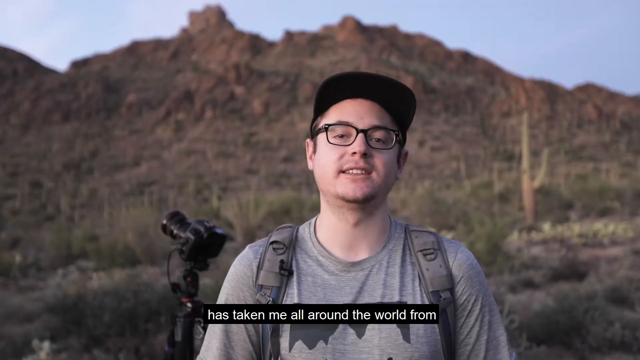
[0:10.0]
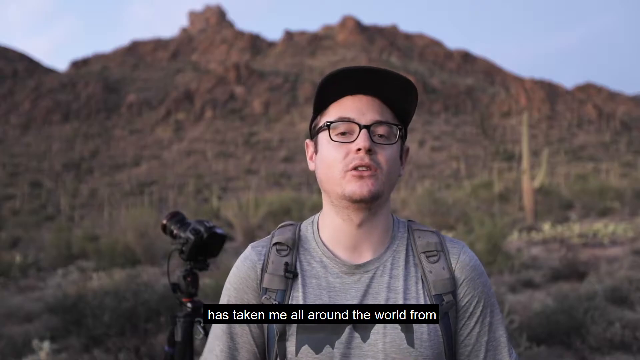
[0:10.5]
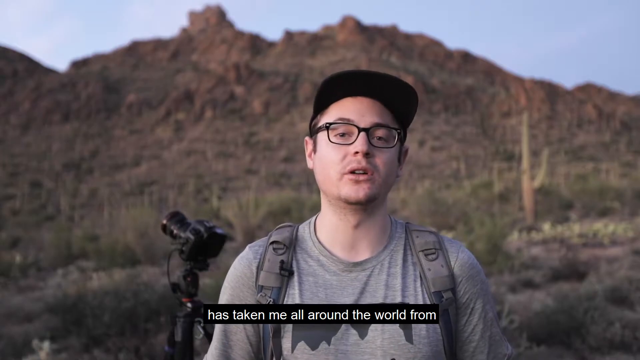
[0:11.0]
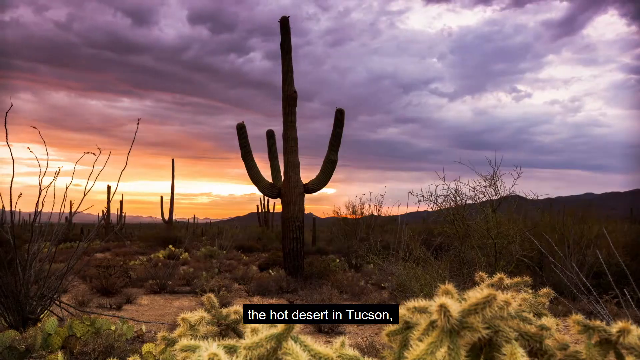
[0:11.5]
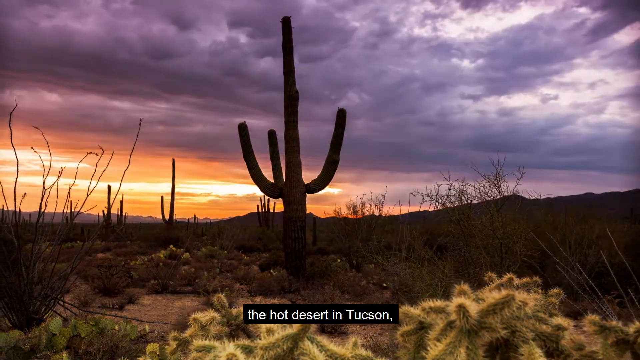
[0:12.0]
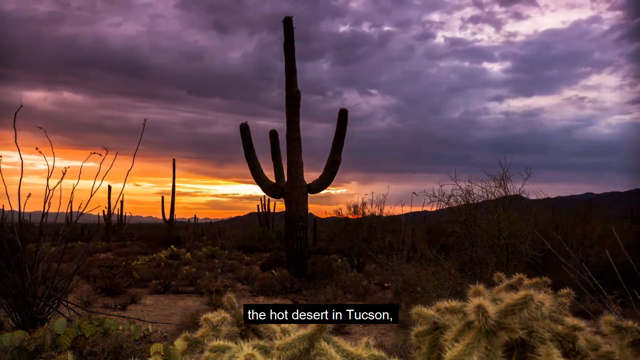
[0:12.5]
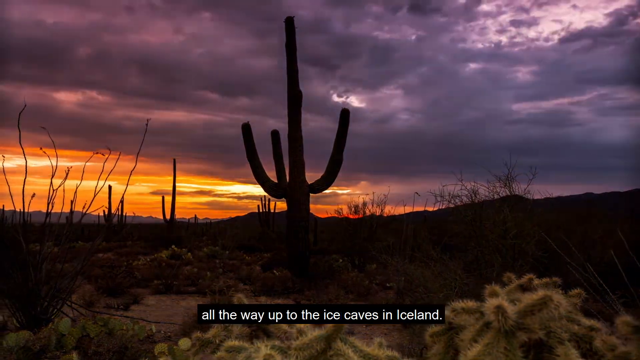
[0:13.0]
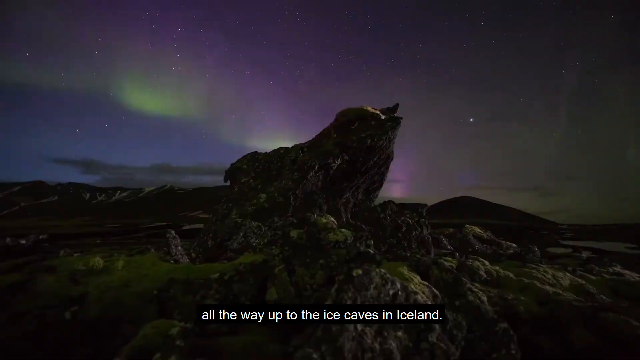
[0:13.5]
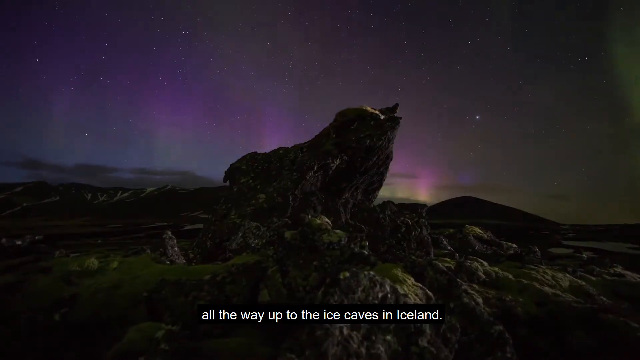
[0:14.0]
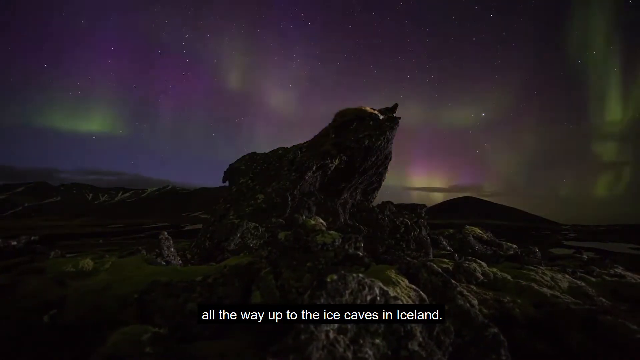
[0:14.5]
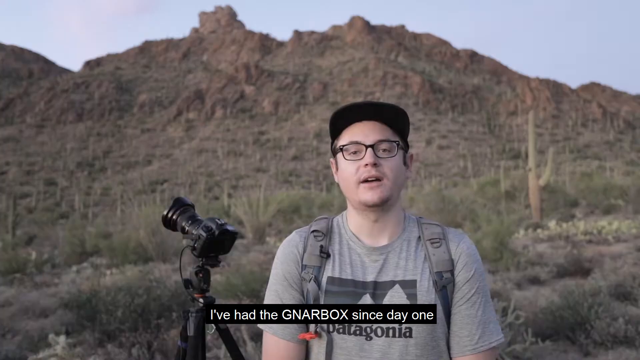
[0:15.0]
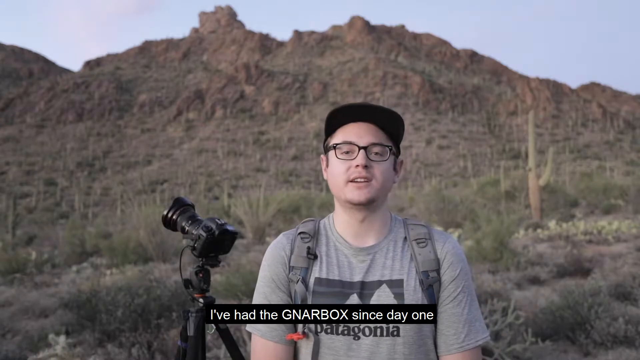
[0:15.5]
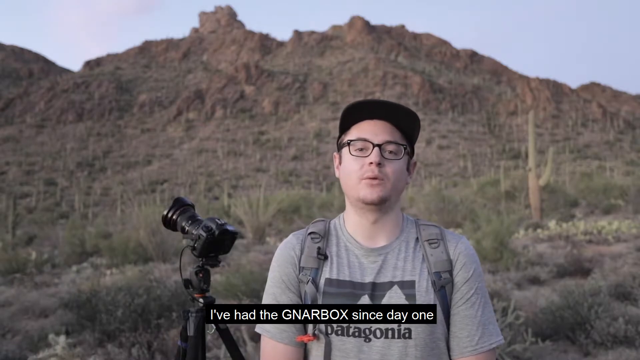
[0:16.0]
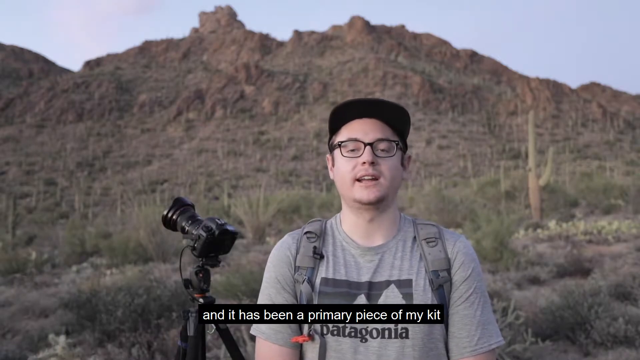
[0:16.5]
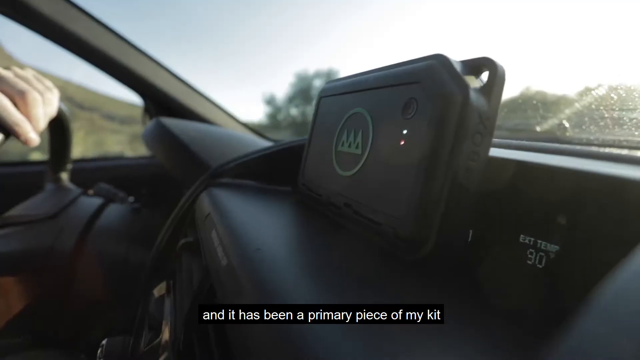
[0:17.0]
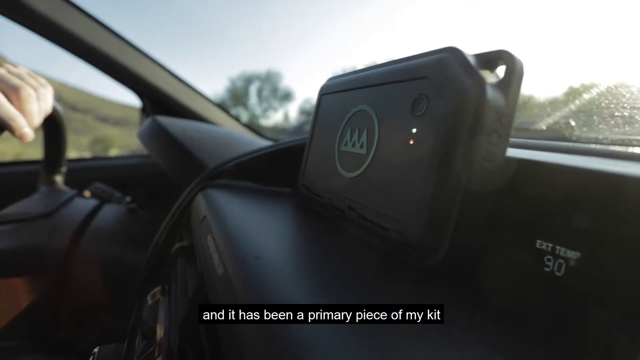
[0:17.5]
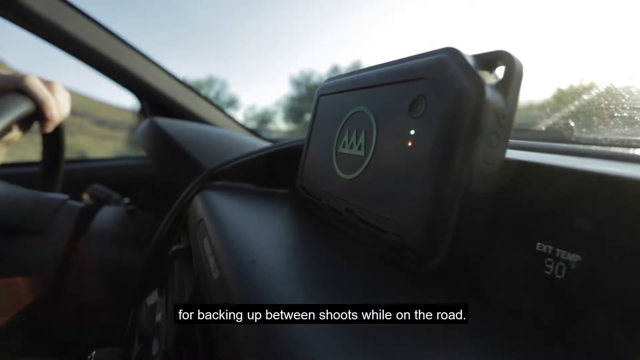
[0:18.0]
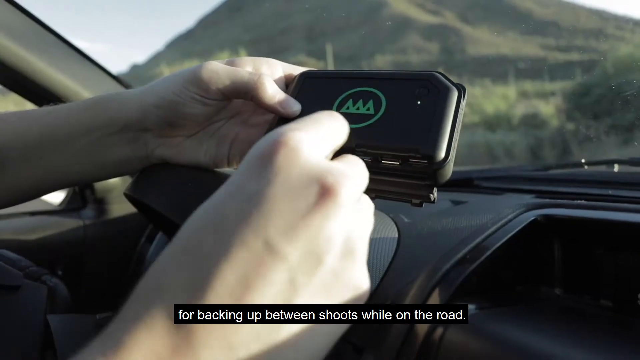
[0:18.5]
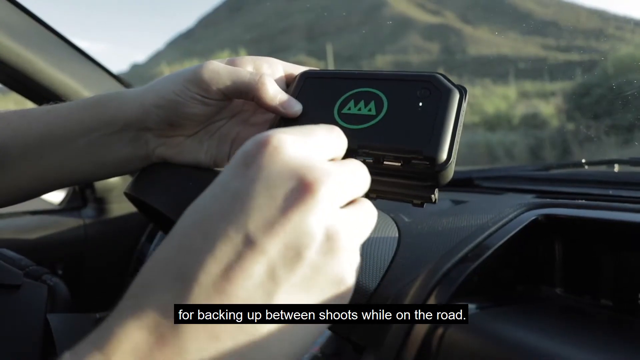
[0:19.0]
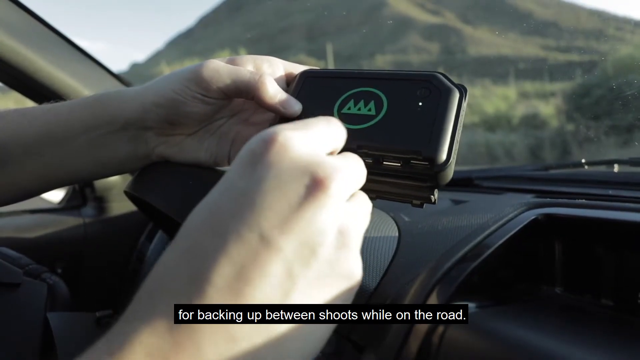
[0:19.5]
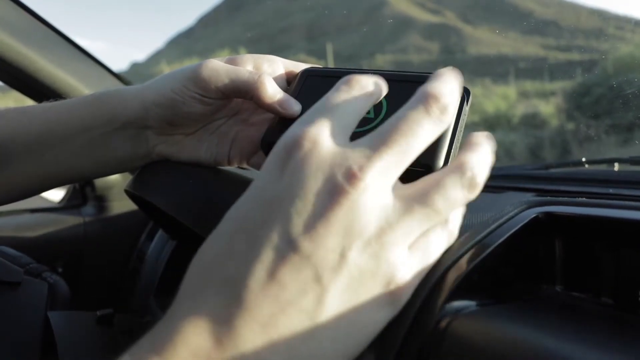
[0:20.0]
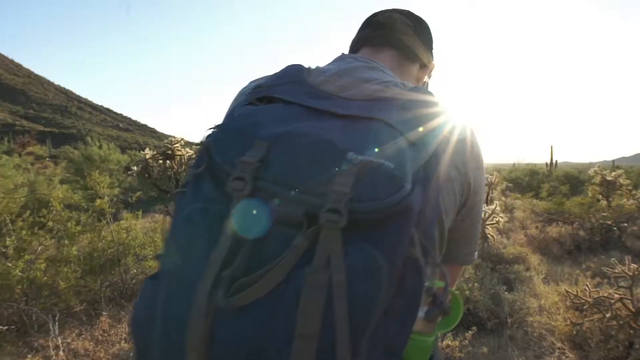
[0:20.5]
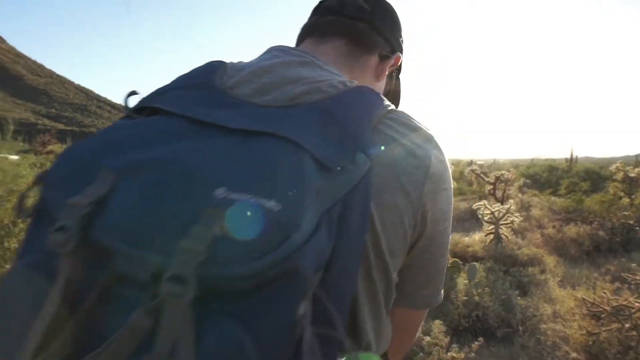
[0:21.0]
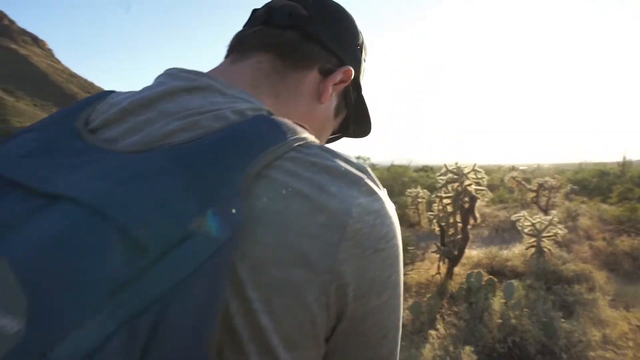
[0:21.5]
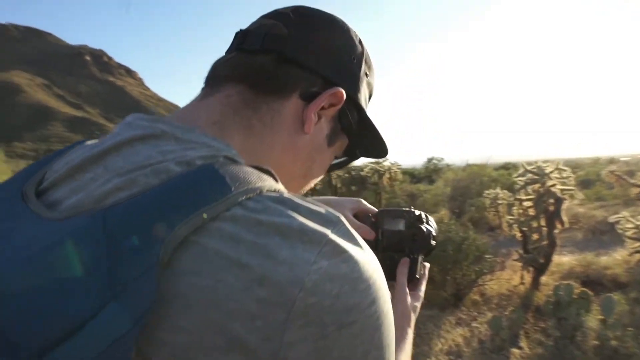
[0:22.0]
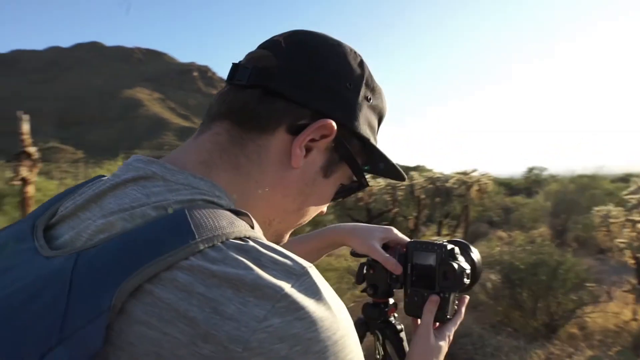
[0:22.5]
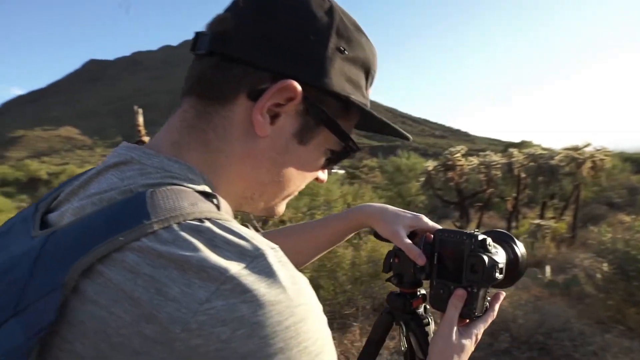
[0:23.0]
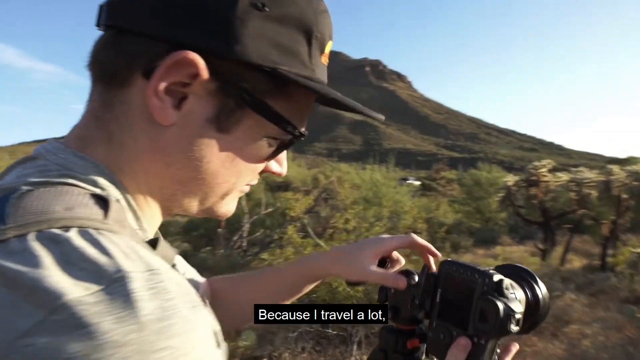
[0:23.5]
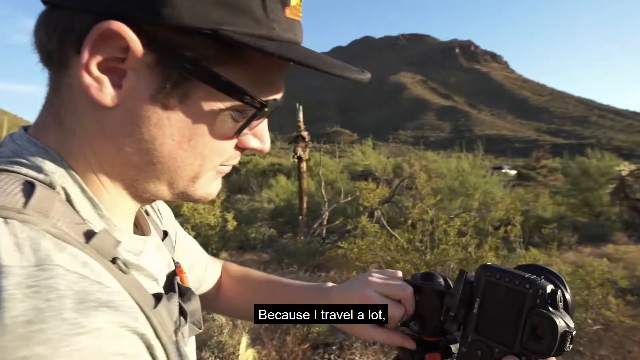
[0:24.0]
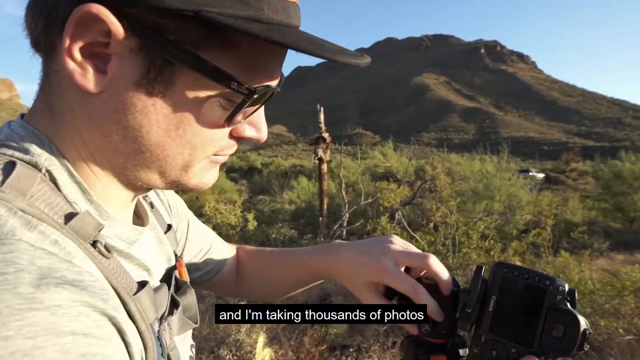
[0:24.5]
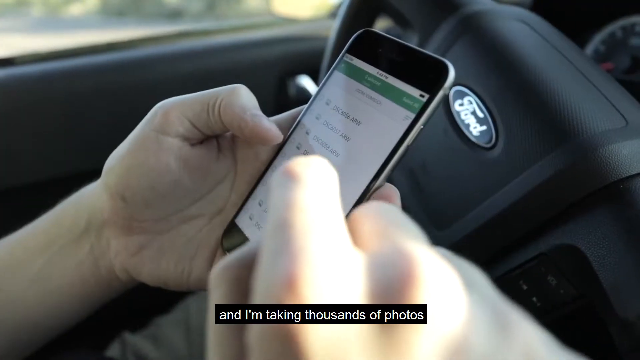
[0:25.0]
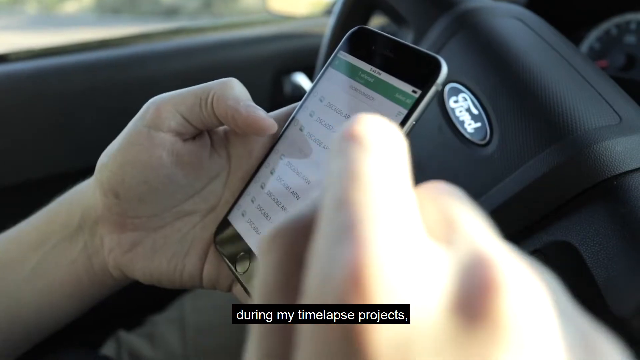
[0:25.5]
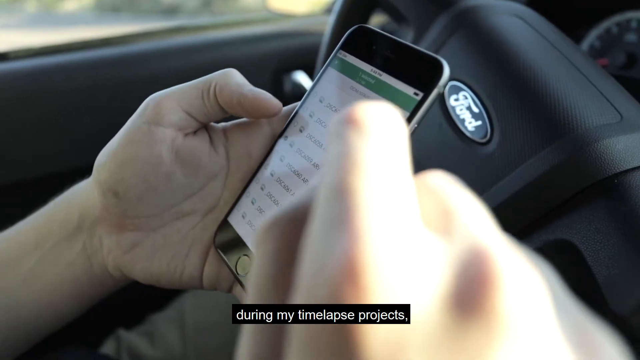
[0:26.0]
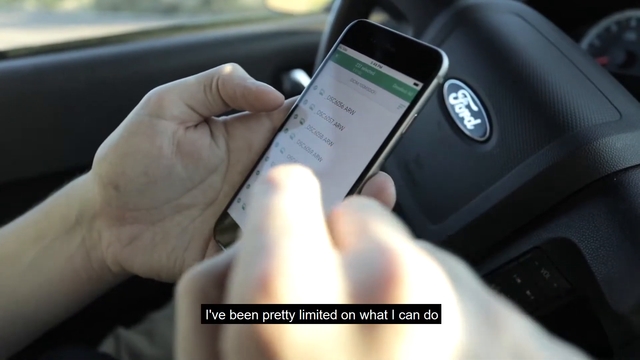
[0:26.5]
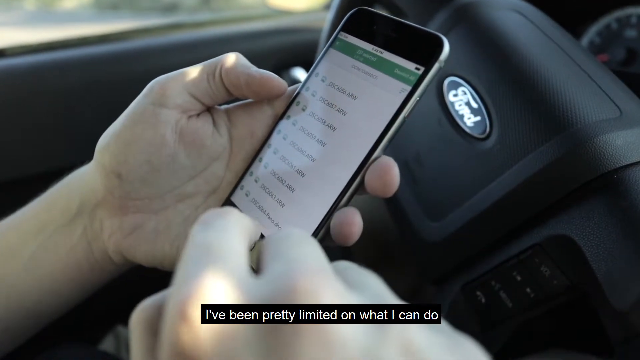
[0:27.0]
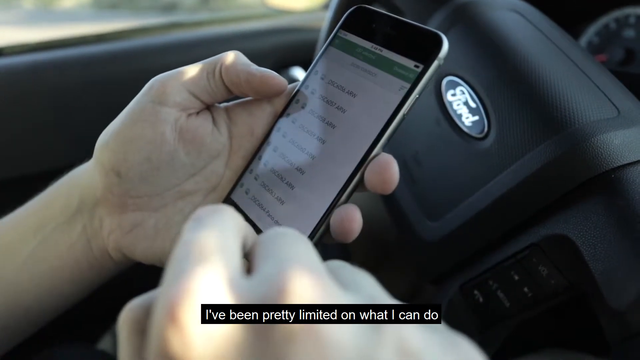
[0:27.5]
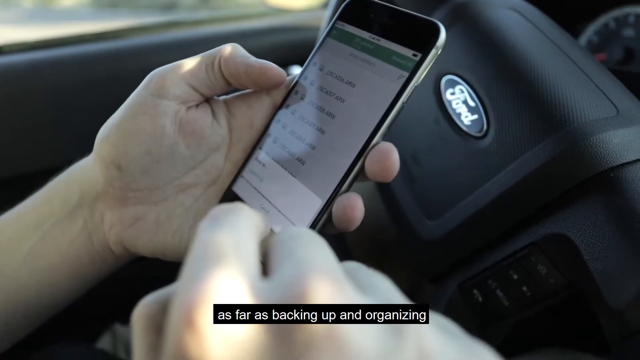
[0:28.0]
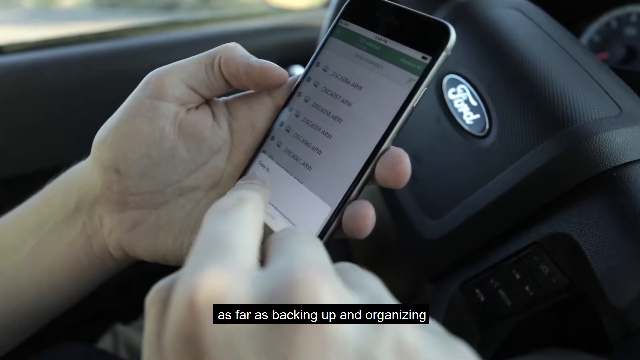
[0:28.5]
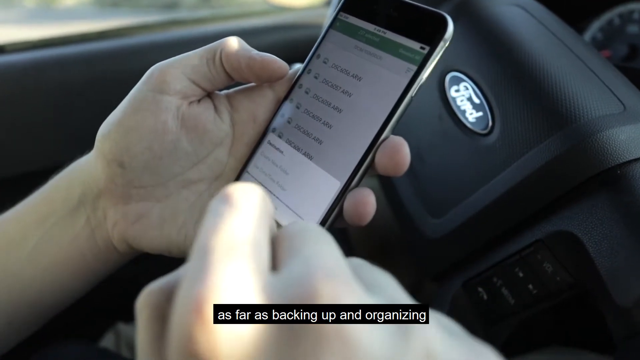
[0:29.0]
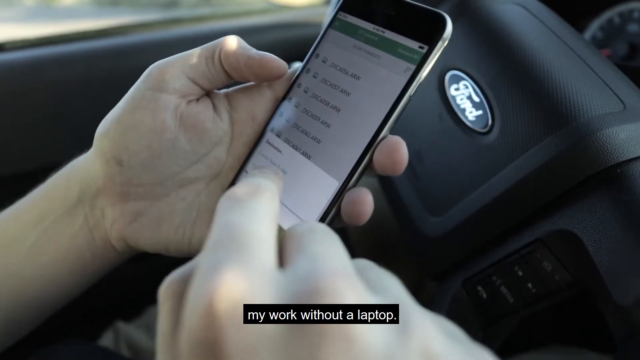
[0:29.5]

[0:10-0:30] Different landscapes appear. A time-lapse of the hot desert in Tucson shows a sky full of clouds with a cactus or some sort of tree in the middle, the sun setting in the background and the clouds moving. Another time-lapse follows, this time of the ice caves in Iceland, with what seems to be the aurora borealis up in the sky. Sean Parker then shows his Gnarbox in the car, saying he has had it since day one, that it is his main tool for backing up shots on the road, and that since he takes thousands of photos while traveling for his time-lapse projects, backing up and organizing everything is not easy, and the Gnarbox is the one thing that allows him to do it.